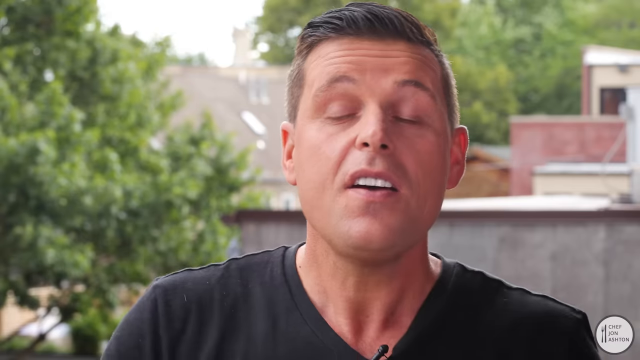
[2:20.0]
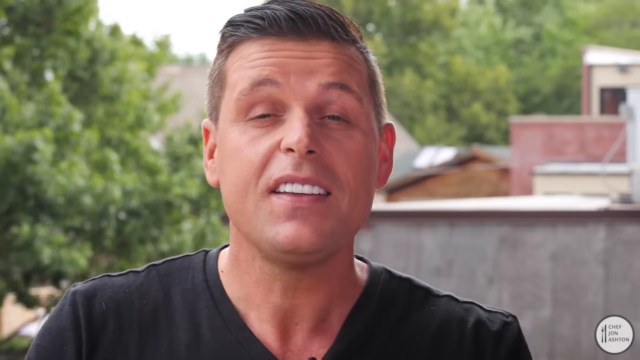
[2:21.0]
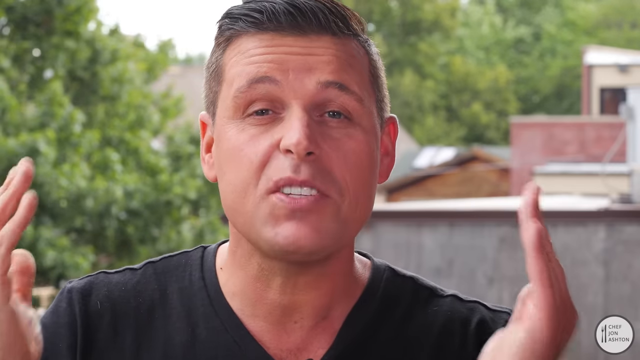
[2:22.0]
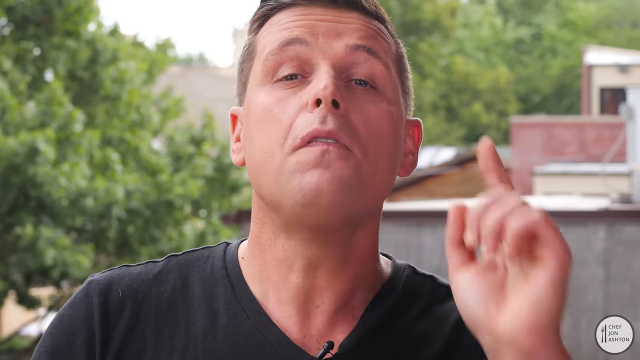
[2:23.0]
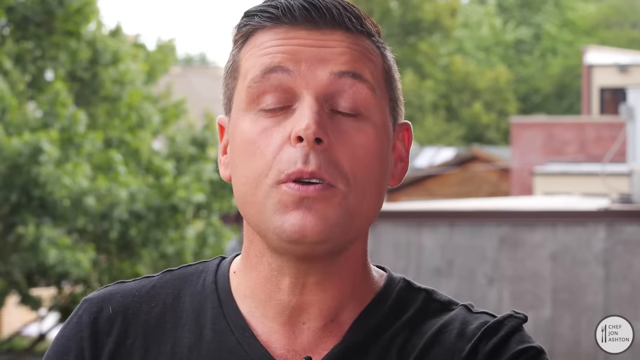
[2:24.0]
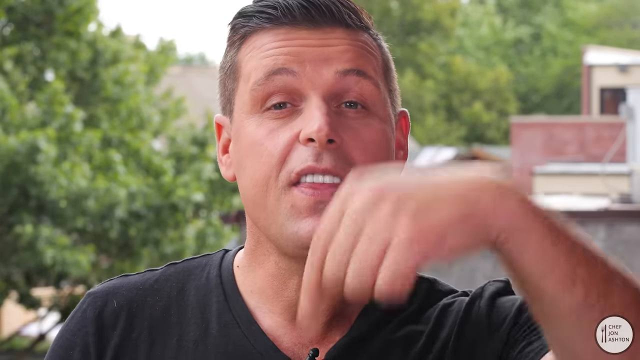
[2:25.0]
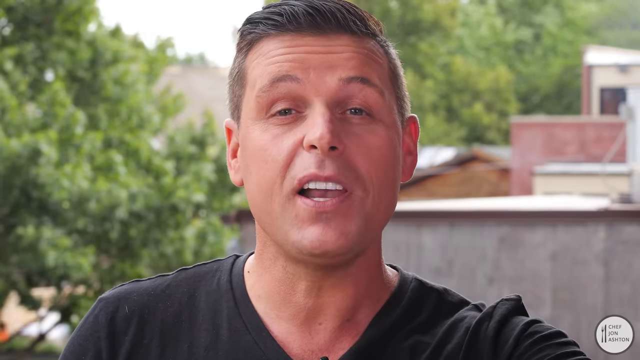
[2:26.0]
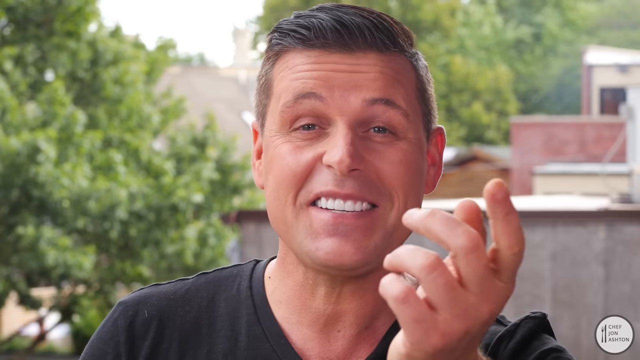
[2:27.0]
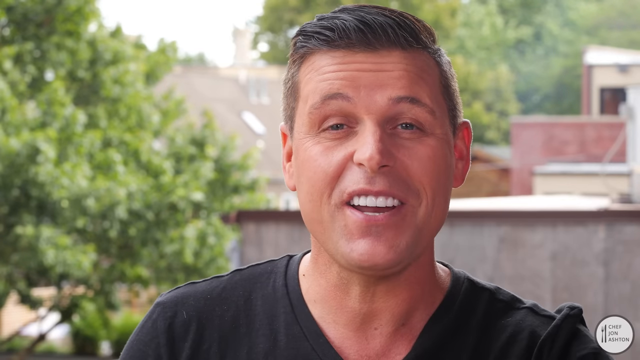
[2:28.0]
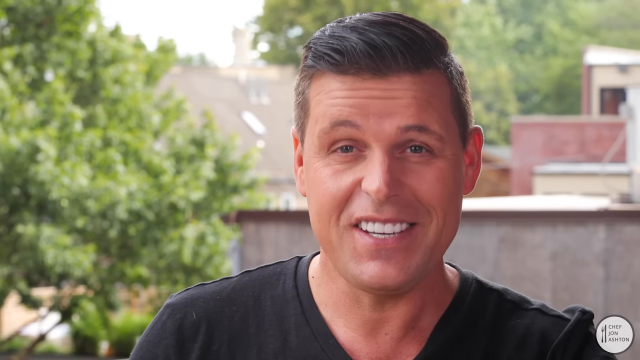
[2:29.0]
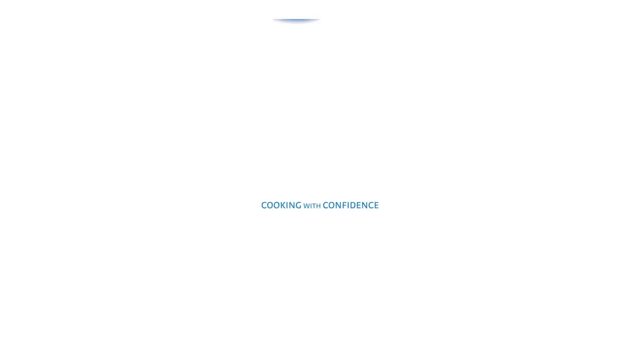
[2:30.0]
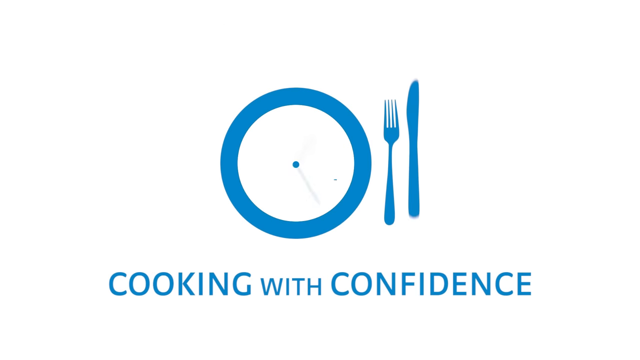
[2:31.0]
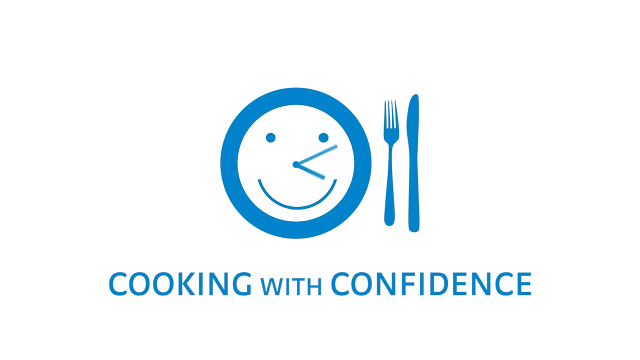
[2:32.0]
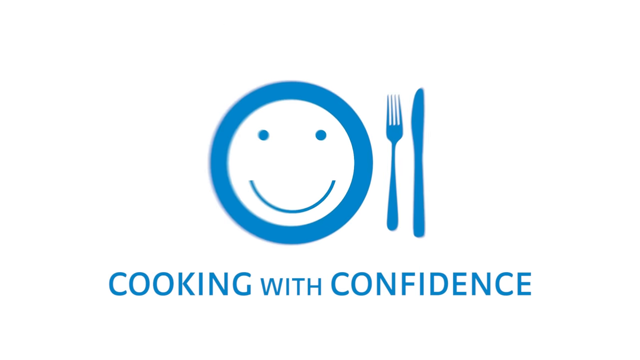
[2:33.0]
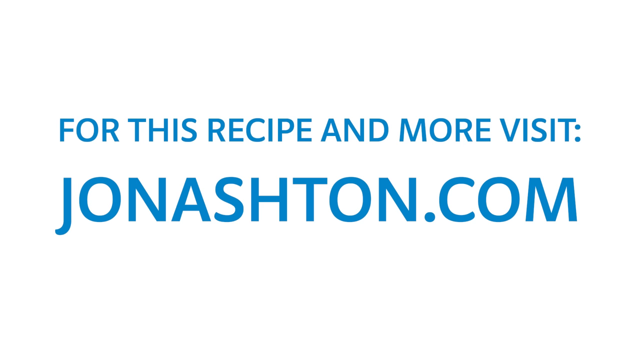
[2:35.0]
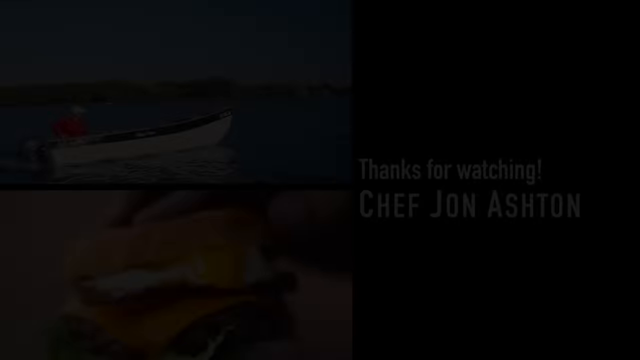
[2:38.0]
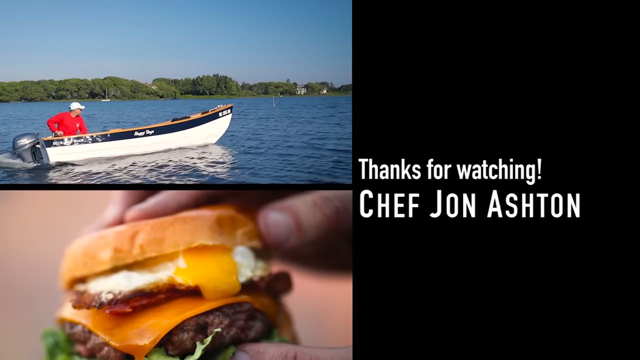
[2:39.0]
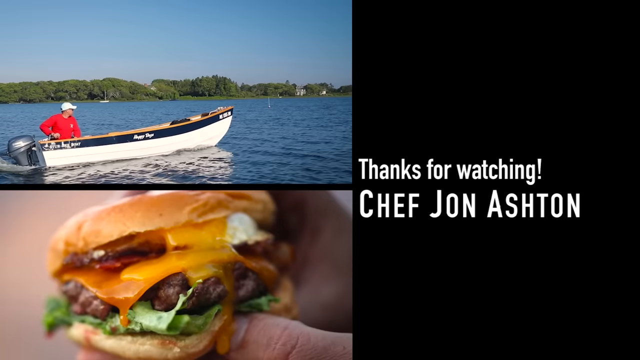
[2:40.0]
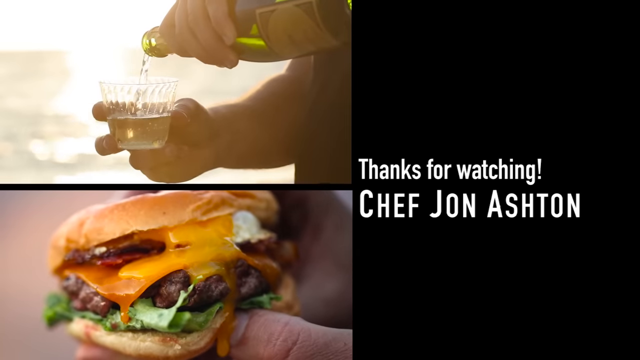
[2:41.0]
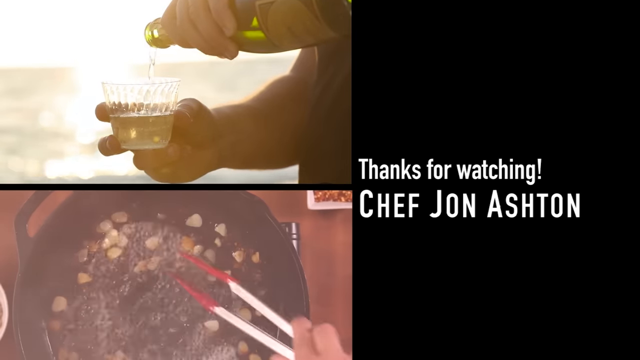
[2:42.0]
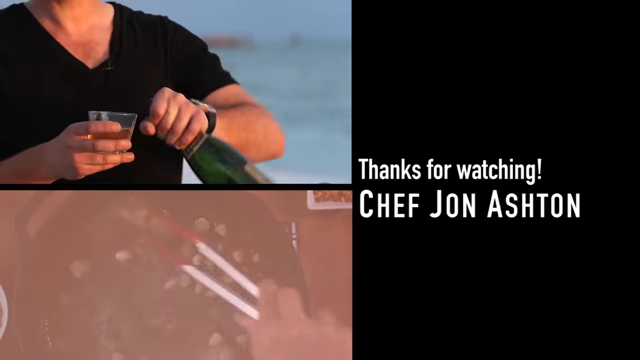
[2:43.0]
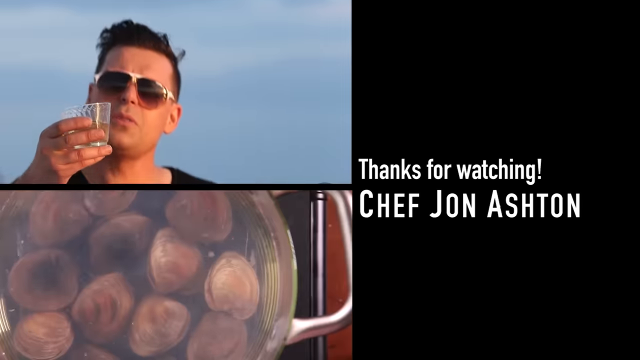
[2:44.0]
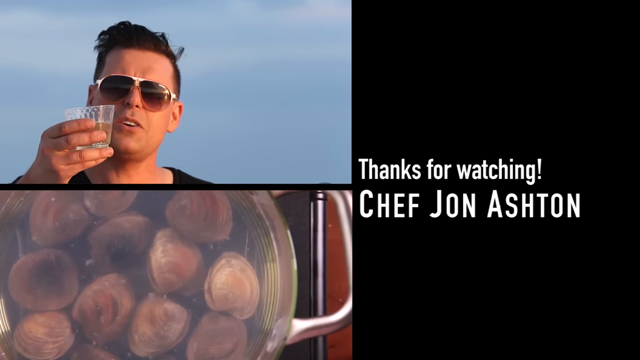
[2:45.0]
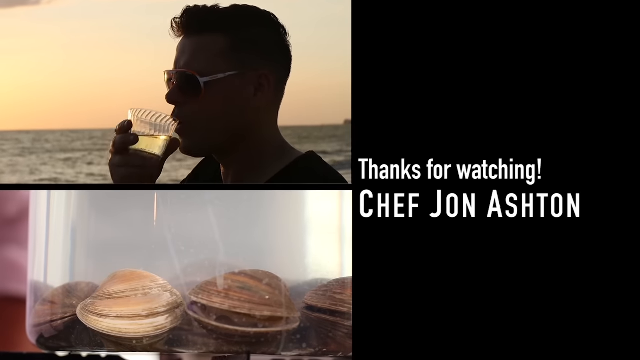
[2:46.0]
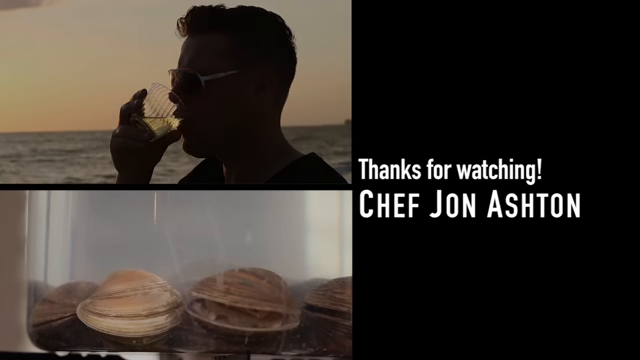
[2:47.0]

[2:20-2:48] A Caucasian man is shown up close in the center of the screen. He wears a black shirt, has dishwater-blonde-looking hair and very white teeth. He talks to the camera, or to his audience through the camera, with both hands raised near his face at about shoulder level while he speaks. He then points at the camera, points down, and smiles. Trees with green leaves and some buildings or houses are behind him. The video then changes to a white background with blue graphics and text: a plate with a smiley face, with a blue fork and knife on the right side of the plate, and right below it at the bottom of the screen the words "Cooking with Confidence." Next, black text in the center of the screen reads "for this recipe and more visit: jonashton.com," followed by "thanks for watching, Chef JON Ashton."